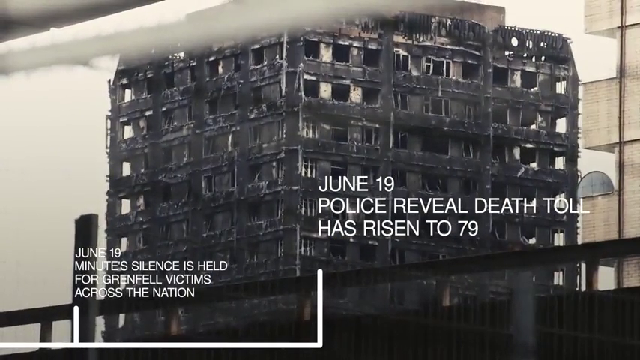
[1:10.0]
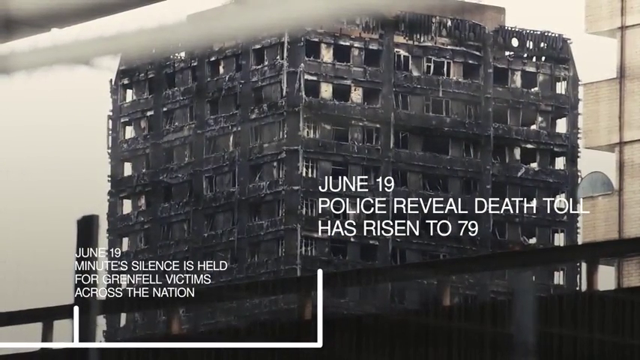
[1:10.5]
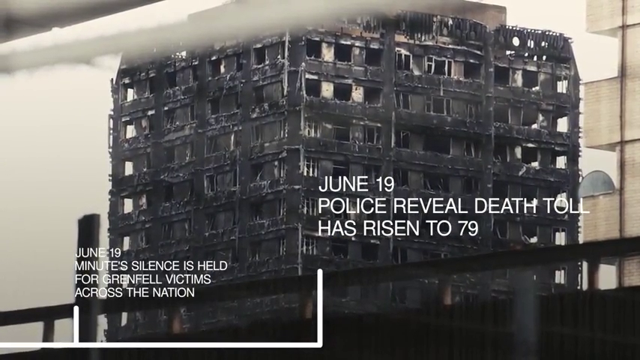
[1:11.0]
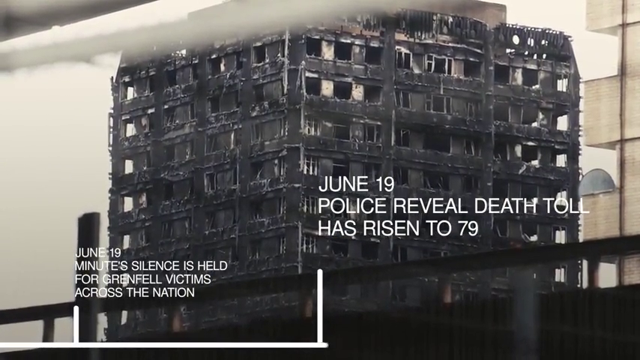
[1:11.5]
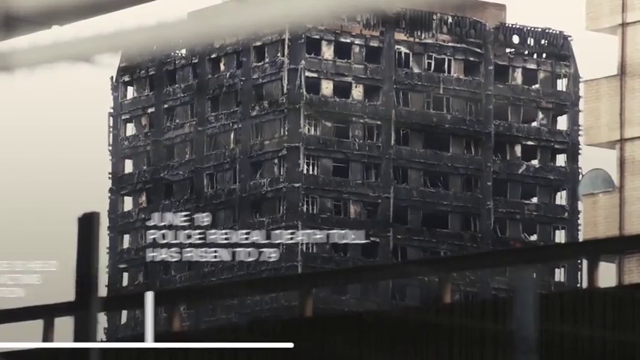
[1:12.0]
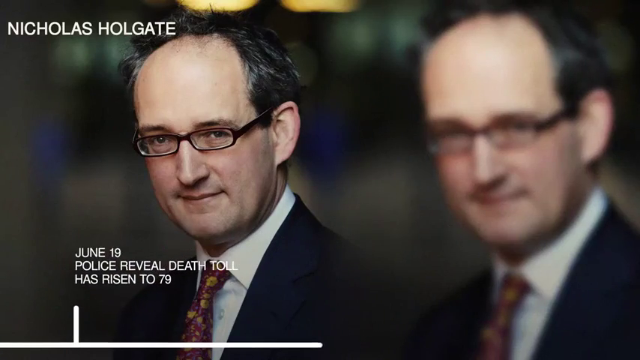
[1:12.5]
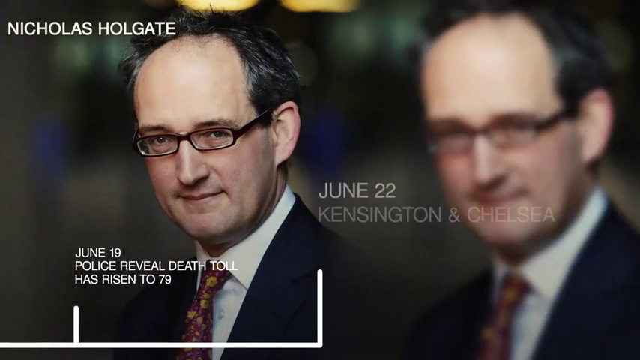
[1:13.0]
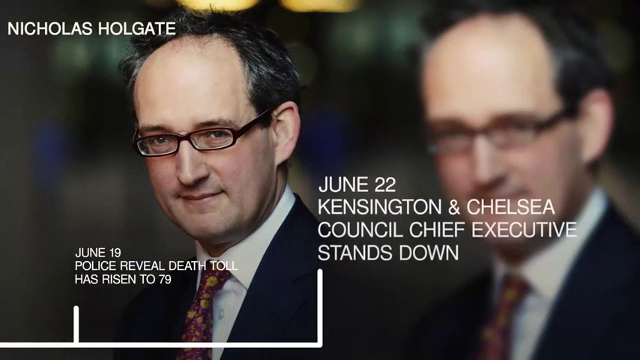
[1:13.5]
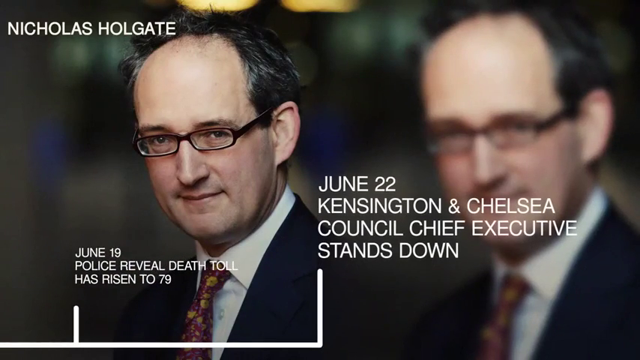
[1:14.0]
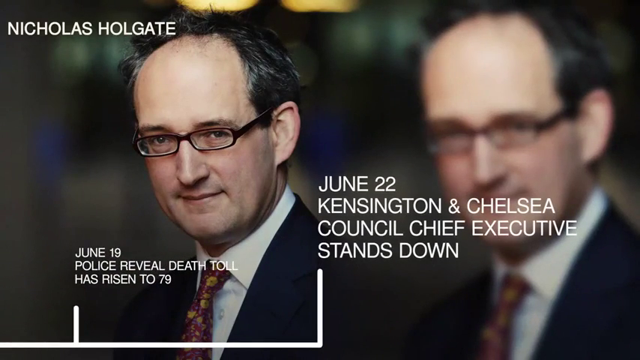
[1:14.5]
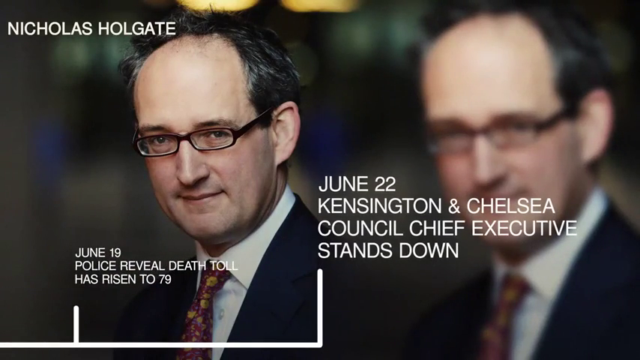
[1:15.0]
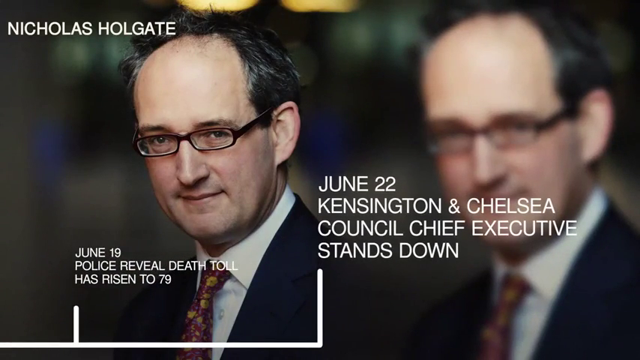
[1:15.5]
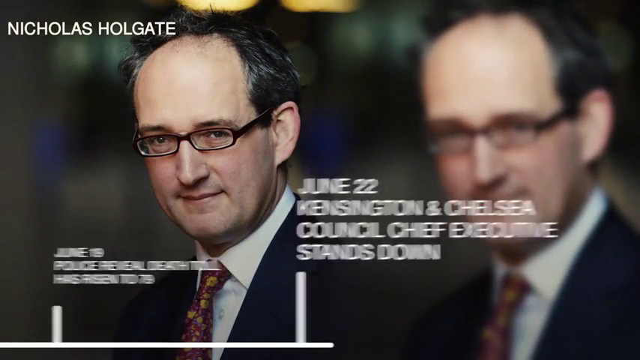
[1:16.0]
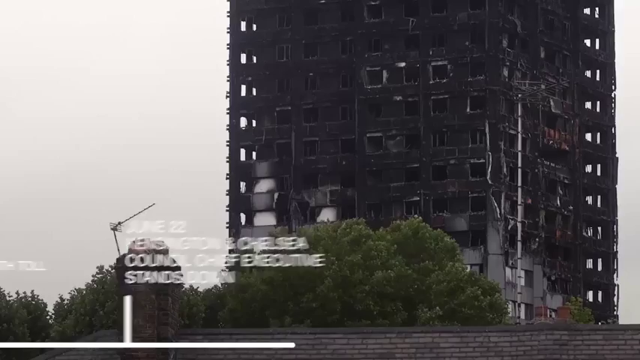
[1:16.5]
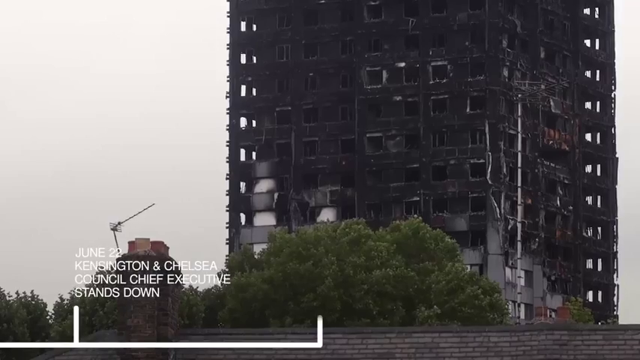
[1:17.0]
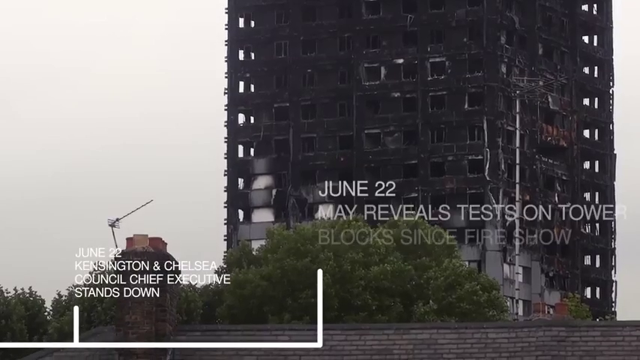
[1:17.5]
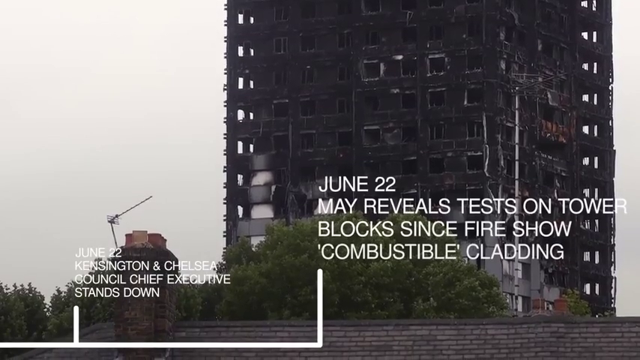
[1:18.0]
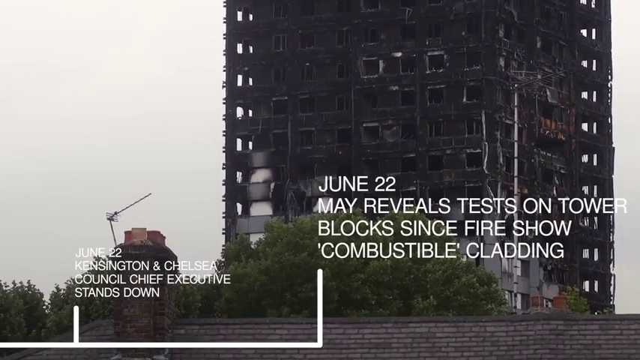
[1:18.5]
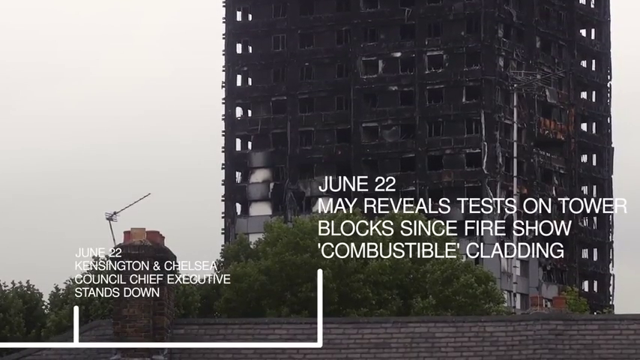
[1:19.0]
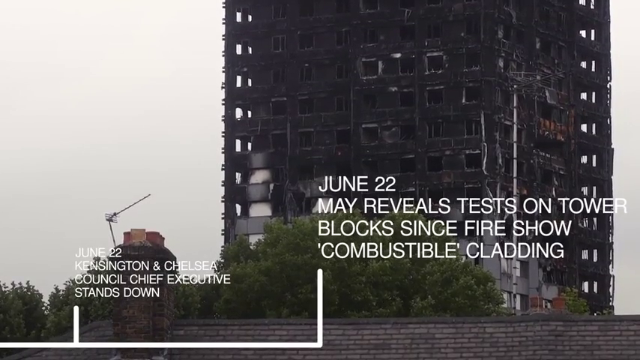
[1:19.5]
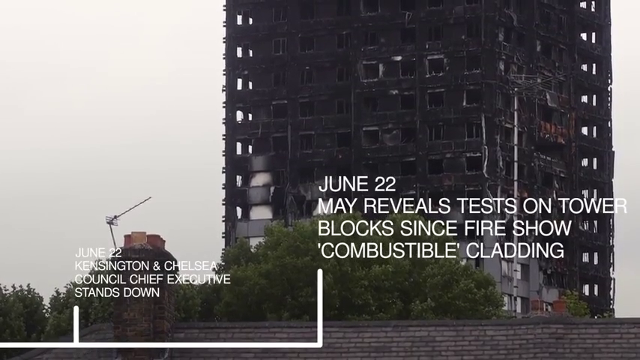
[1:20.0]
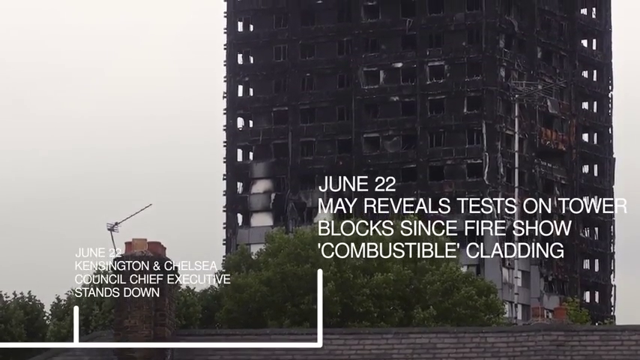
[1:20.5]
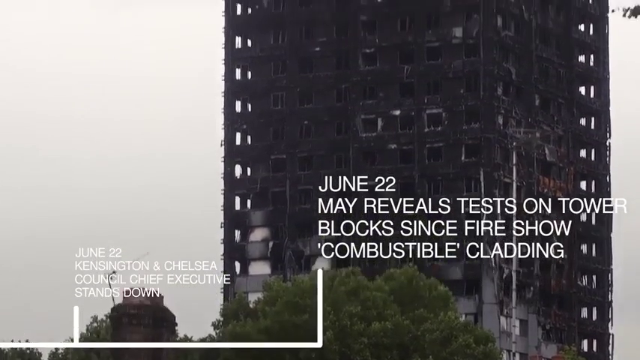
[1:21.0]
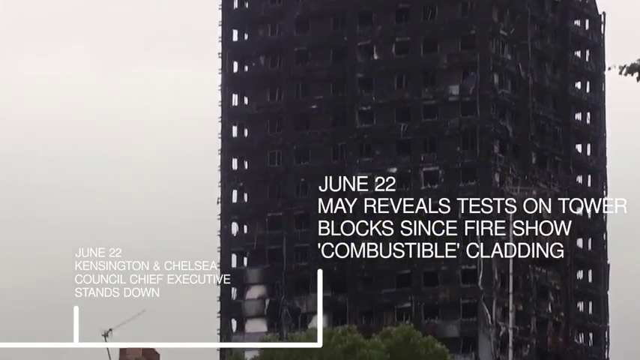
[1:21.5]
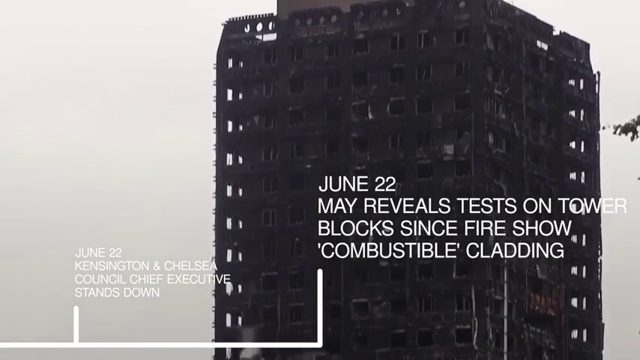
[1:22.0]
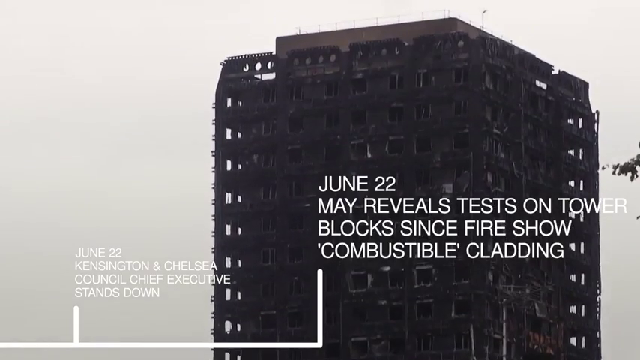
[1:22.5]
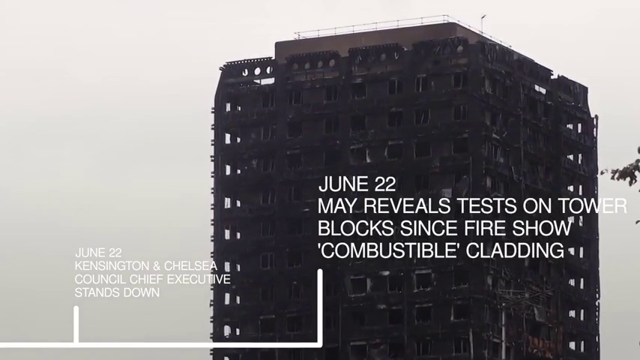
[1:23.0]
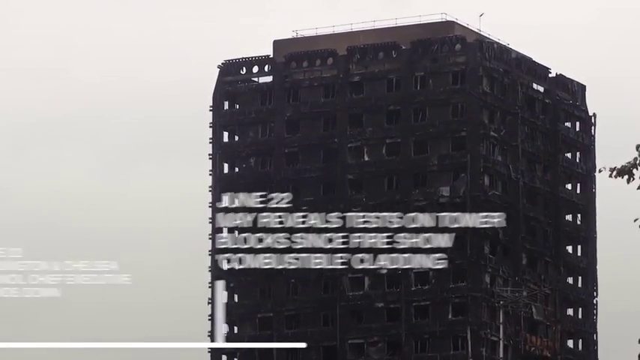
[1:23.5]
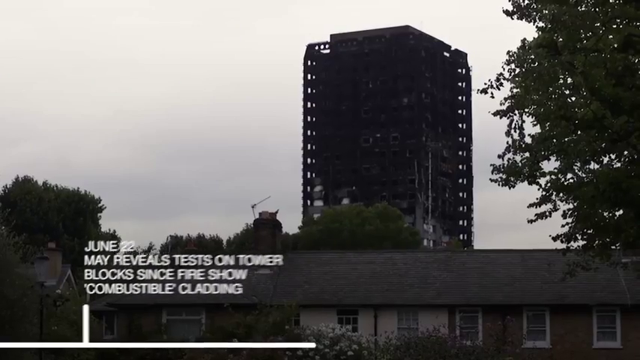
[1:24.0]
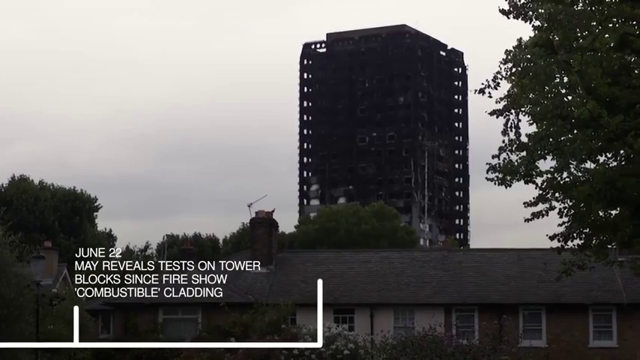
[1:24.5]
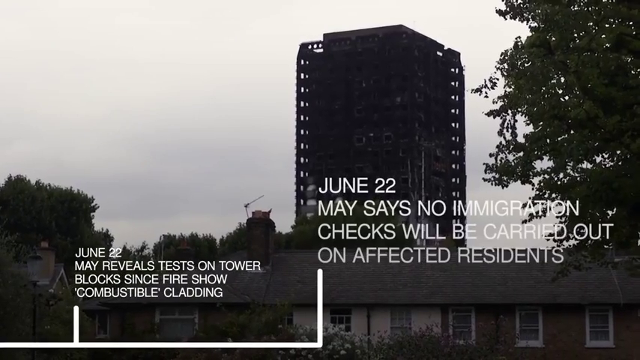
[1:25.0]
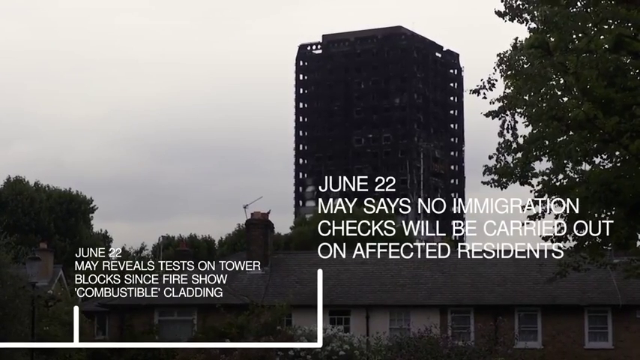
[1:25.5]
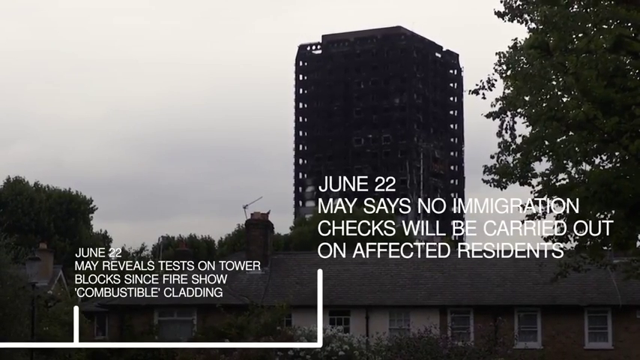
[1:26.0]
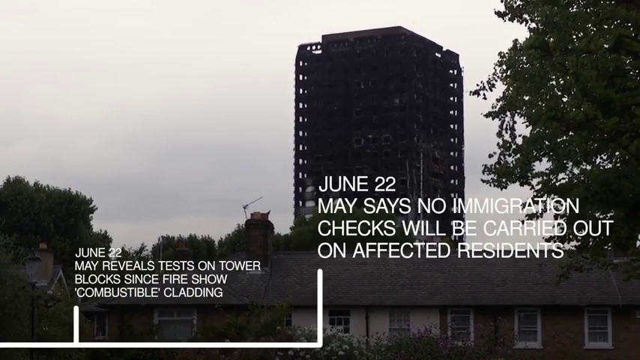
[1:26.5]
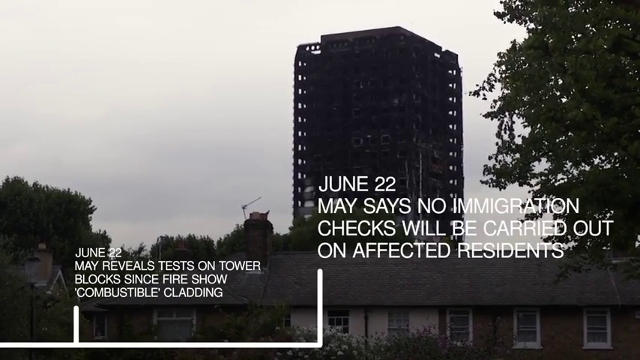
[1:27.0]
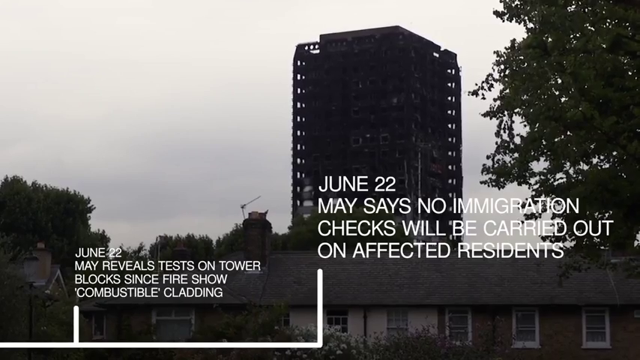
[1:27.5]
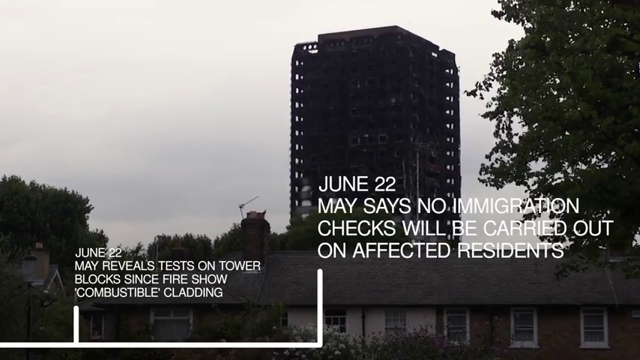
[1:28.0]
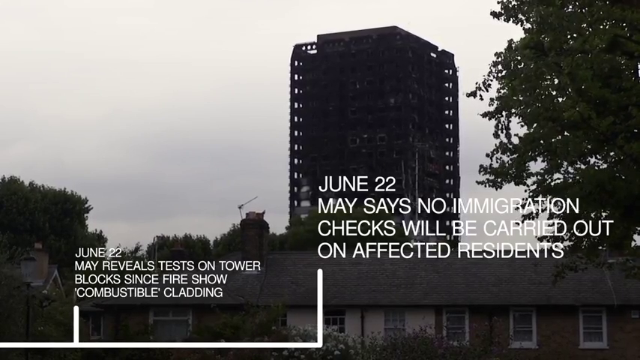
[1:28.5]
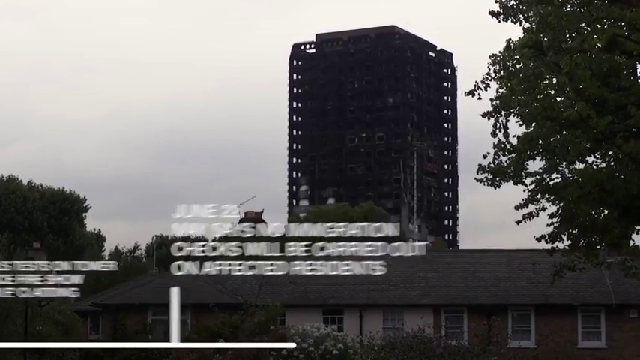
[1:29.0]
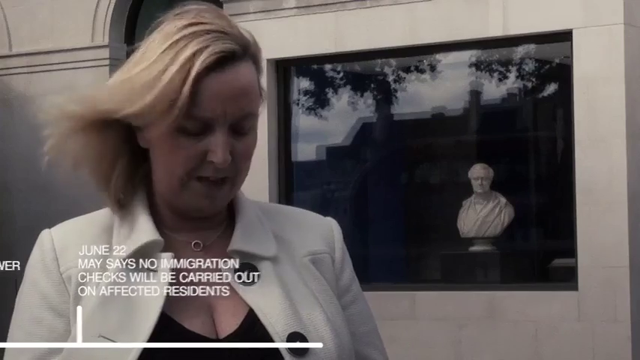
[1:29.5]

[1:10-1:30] A person with short hair and glasses is smiling and looks kind of wrinkled. Text reads "June 22nd, Kensington and Chelsea Council Chief stands down," then moves from the center down to the left. Smaller text follows: "June 22nd, May reveals tests on tower blocks since fire," mentioning combustible cladding. The view moves up to a burned-down building, and the text goes down to the left. Text arrives reading "June 22nd, May says no investigation checks will be carried out on affected residents." The text goes to the left, and bigger text at the right reads "June 19th, police revealed death toll has risen to 79." That text goes to the left, followed by "June 22nd, Kensington and Chelsea Council of Chief Executives stands down," and the text moves down to the left and to the right.